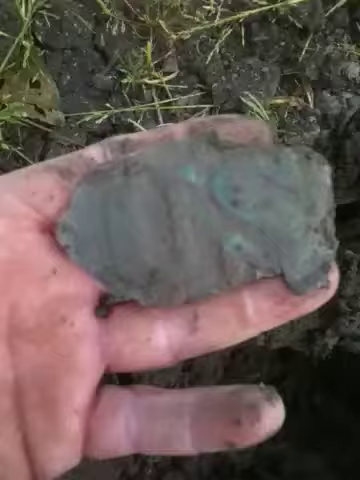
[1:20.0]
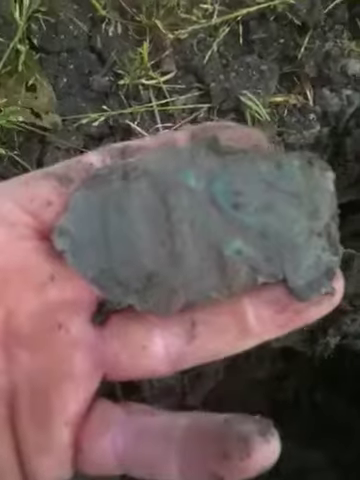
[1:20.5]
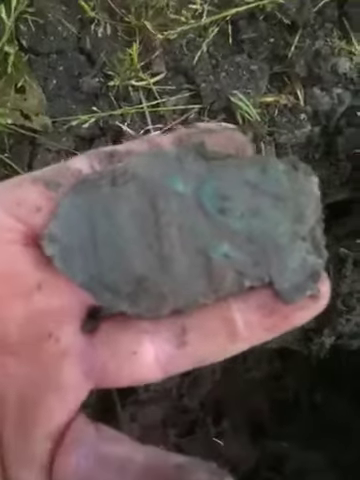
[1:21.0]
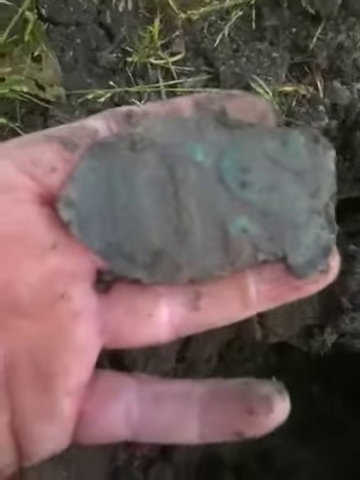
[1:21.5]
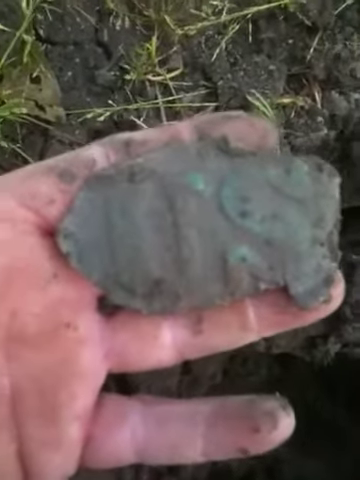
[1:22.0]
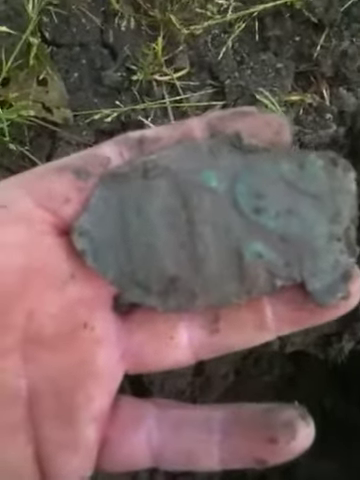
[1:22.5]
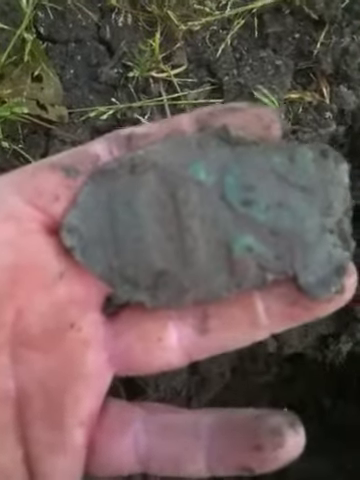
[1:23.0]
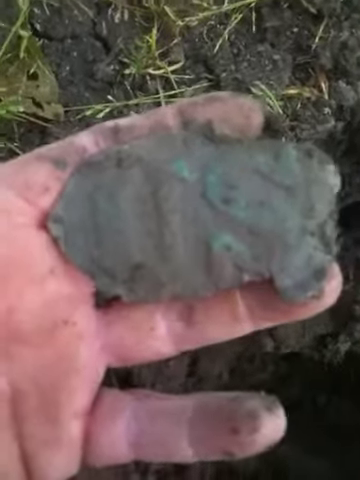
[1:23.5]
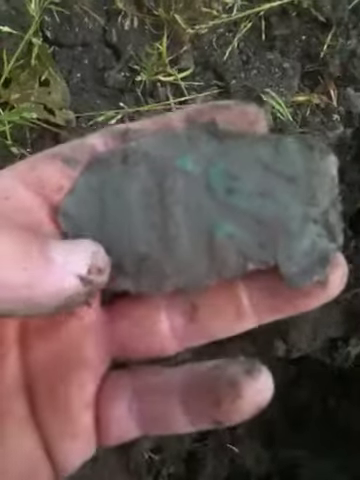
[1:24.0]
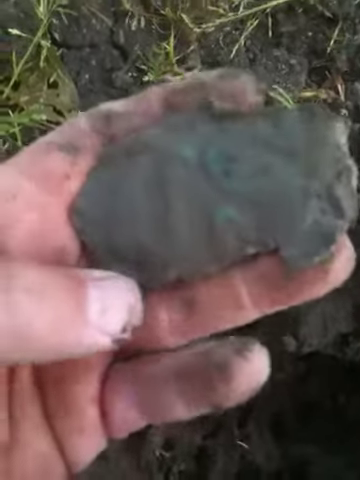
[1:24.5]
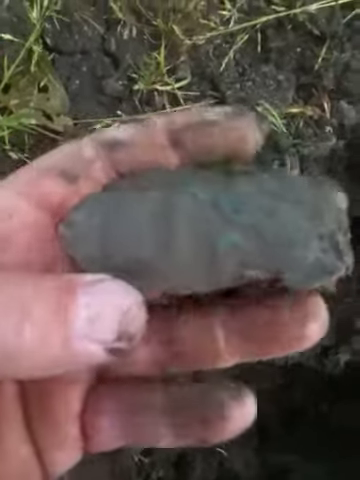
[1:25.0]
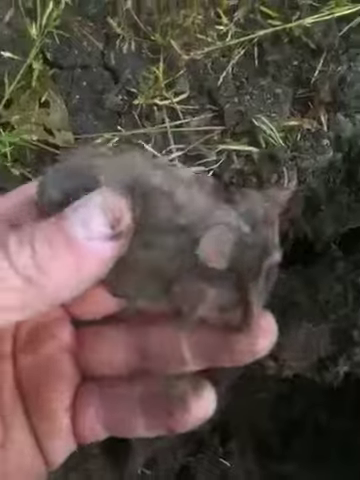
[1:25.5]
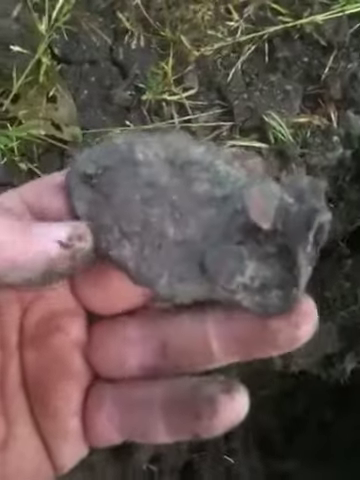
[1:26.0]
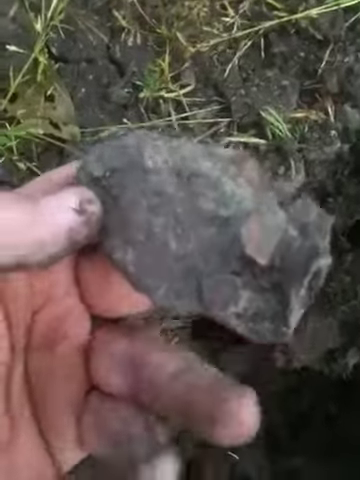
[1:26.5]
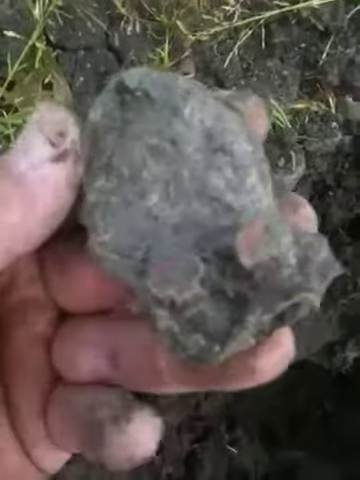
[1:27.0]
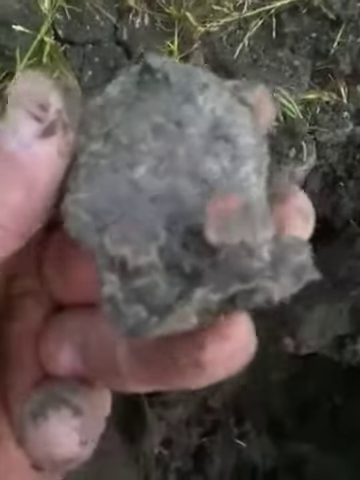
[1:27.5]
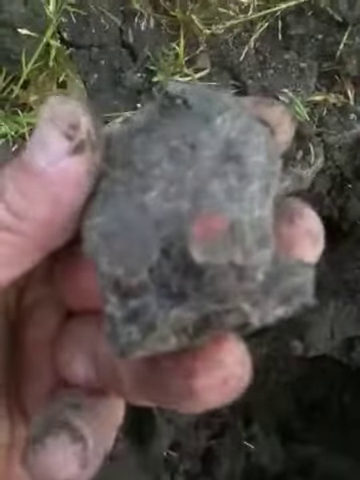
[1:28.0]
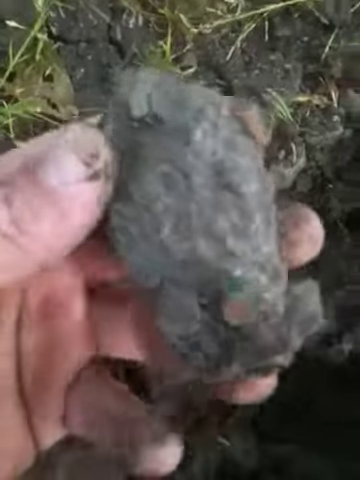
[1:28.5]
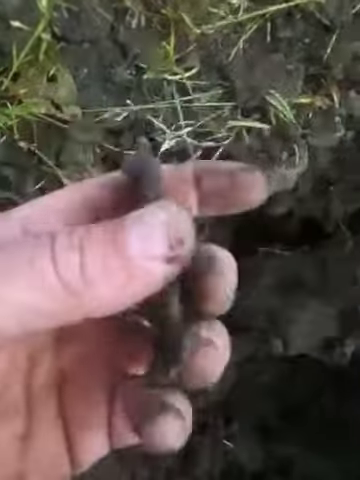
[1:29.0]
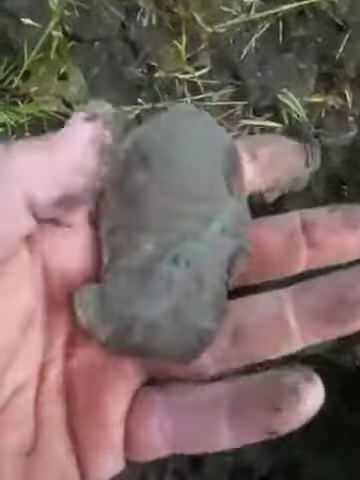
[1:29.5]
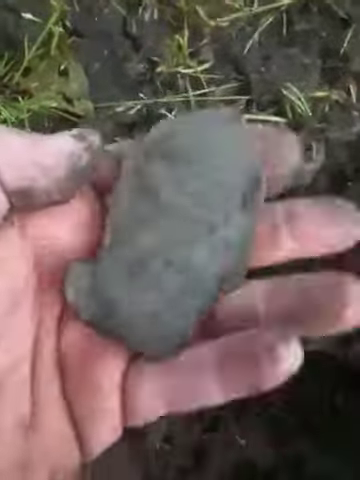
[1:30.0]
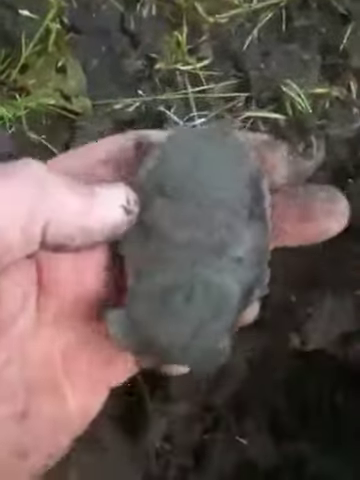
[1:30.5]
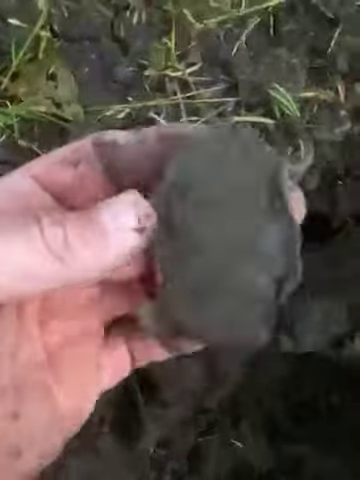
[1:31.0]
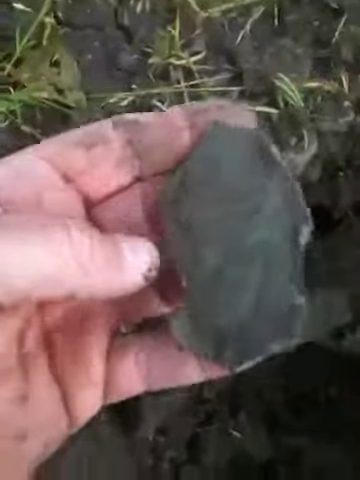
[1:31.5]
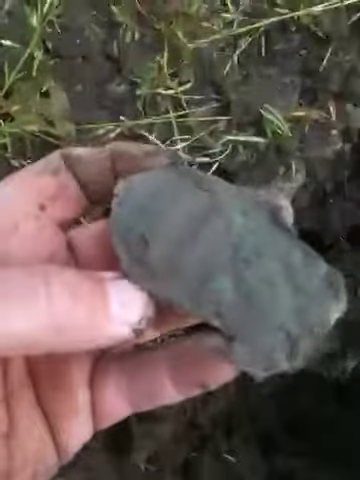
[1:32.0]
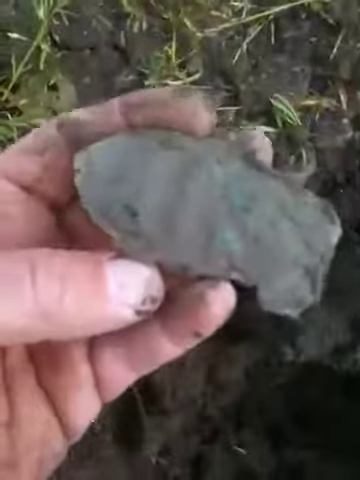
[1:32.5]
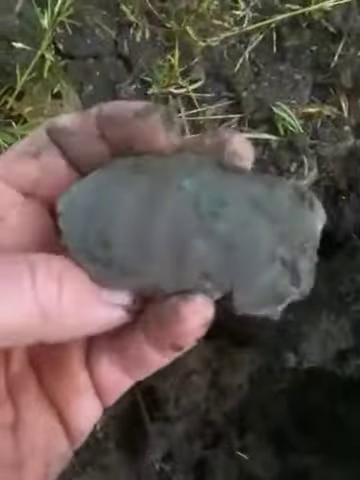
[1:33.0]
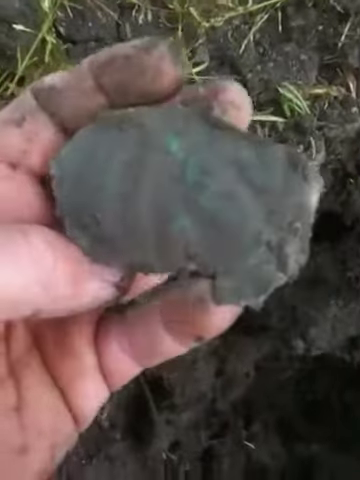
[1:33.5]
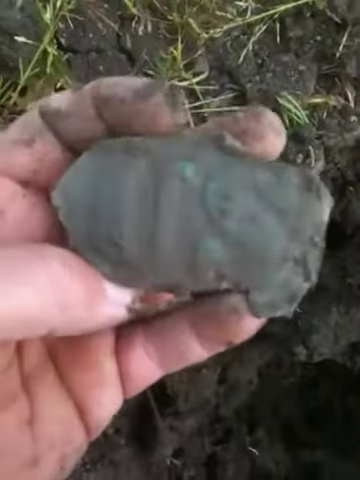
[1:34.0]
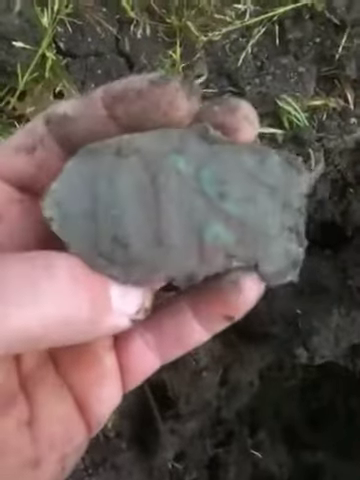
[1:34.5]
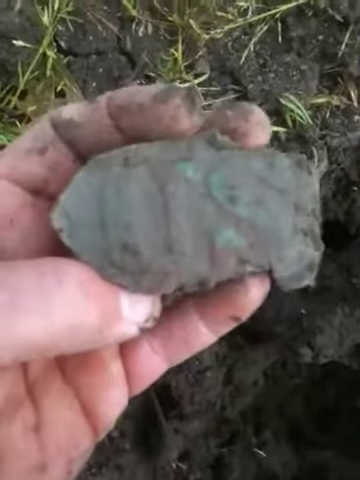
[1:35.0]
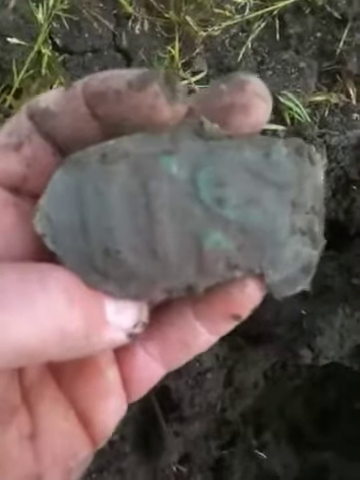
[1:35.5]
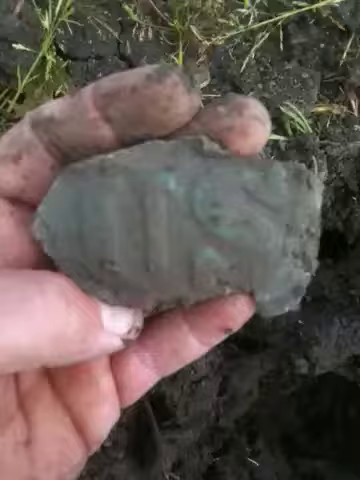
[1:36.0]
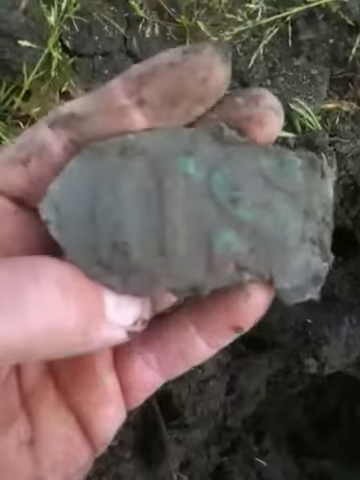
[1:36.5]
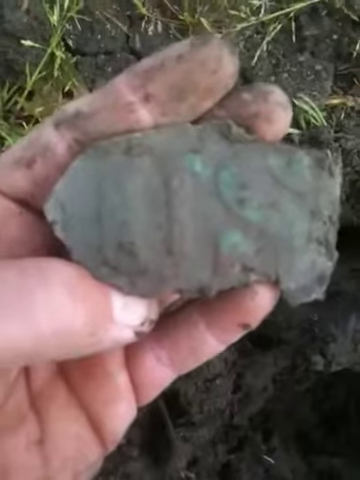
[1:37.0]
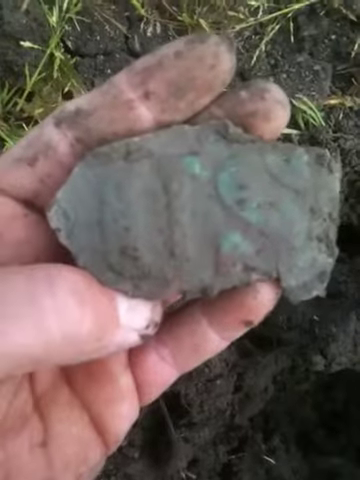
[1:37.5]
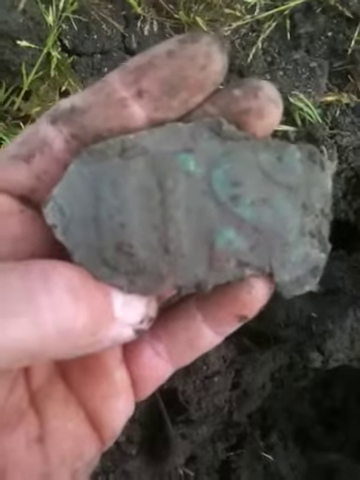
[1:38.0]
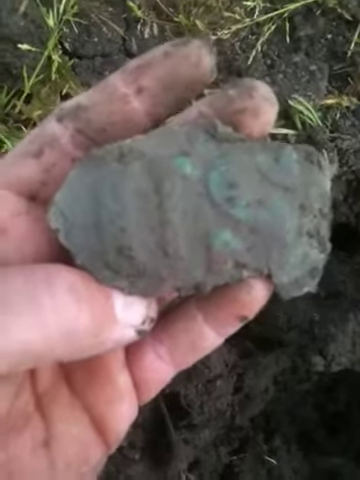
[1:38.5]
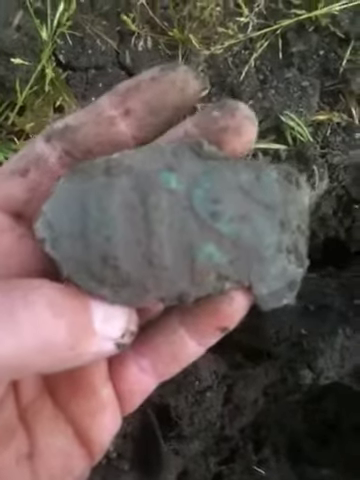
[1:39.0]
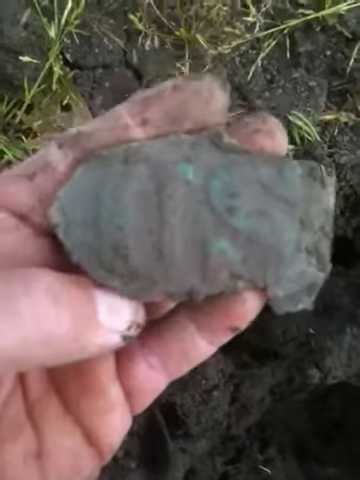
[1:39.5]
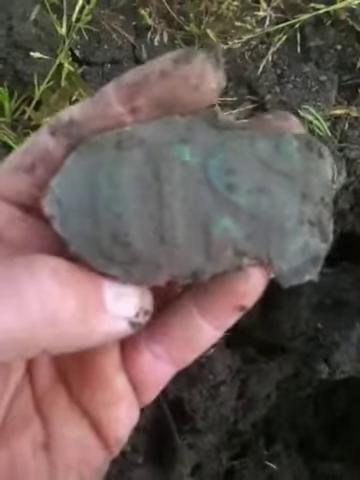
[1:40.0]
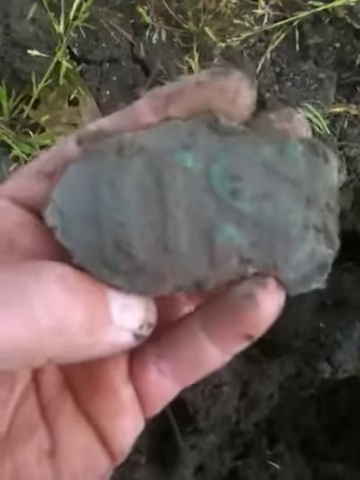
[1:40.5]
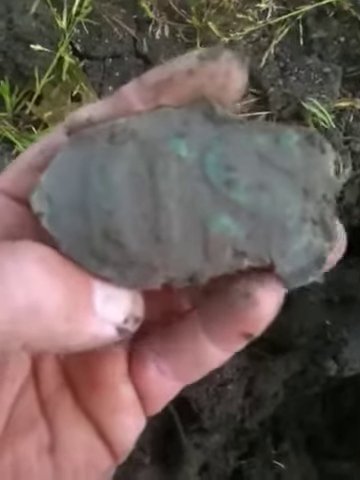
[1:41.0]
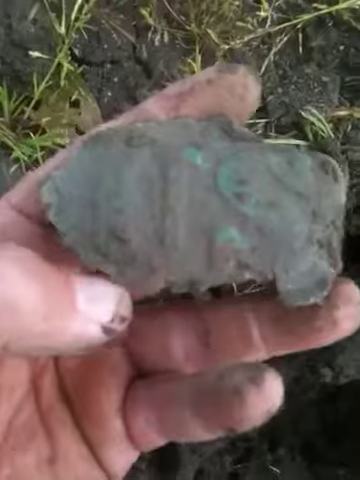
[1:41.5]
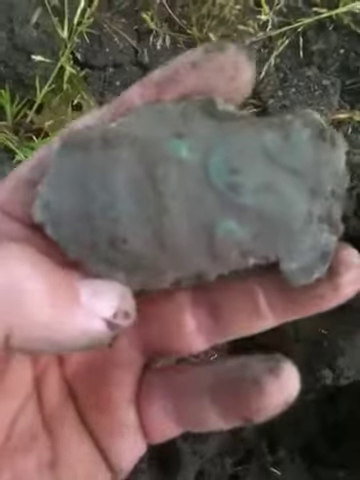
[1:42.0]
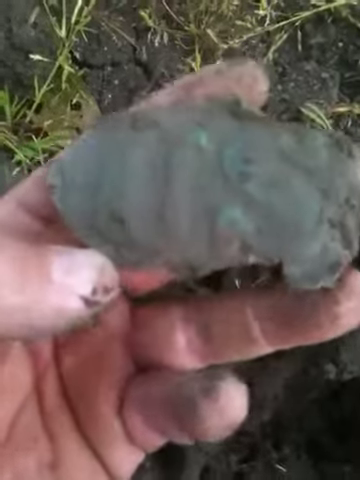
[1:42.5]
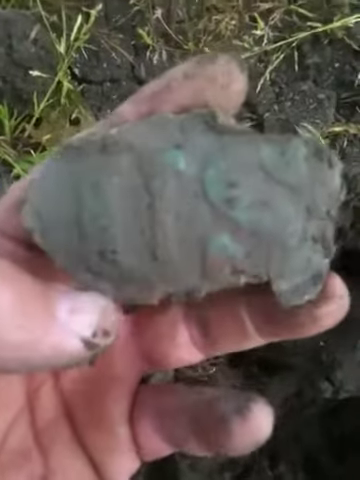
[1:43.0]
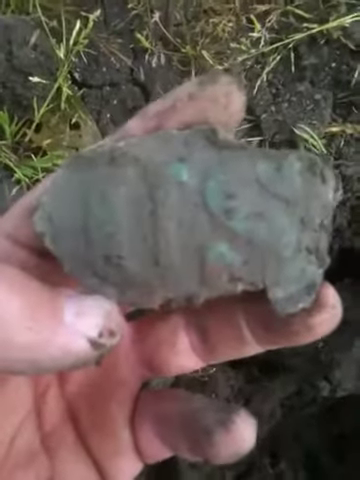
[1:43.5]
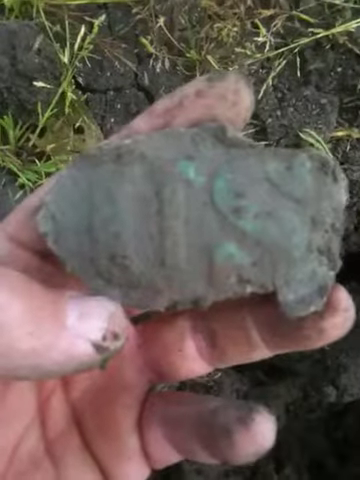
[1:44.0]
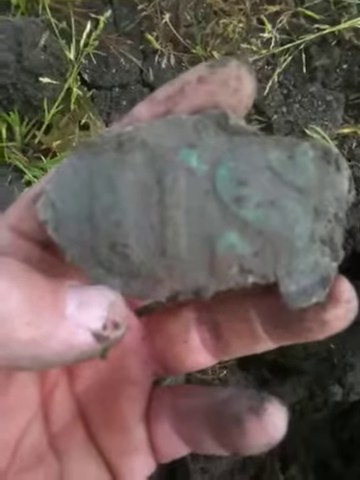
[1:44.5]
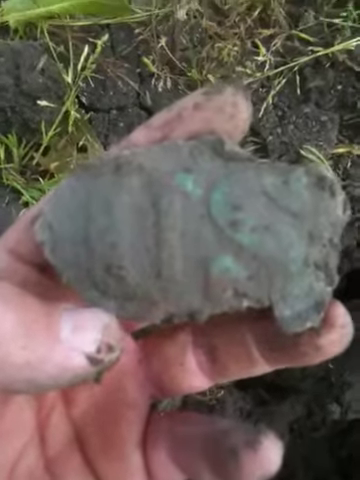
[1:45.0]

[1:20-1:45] A light-skinned man's left hand holds a semi-translucent, multicolored fossilized rock with its first three fingers. The rock is oblong, grayish but also turquoise and green, and both the rock and the hand are covered in mud. In the background is a hole in the ground about a foot deep, with clumps of mud and dirt and sprigs of grass around it and a number of rocks around that. He rotates the fossil over to its back side, which has a larger number of crevices and more texture, with a more broken and cracked pattern, then flips it back over to the smoother side. One side of the rock tapers off almost to a point, while the other side, on the right, is somewhat flat. He begins holding the rock with his first two fingers, slightly rotating it around and pinching it on the left side of the screen, which is the pointed side. The shot is vertical from a camera phone, so he is presumably holding the camera with his right hand while holding up the artifact with his left.